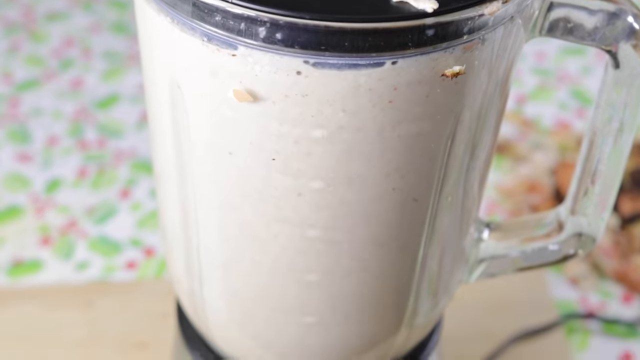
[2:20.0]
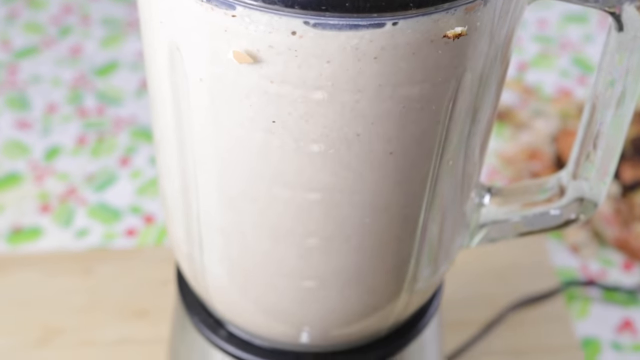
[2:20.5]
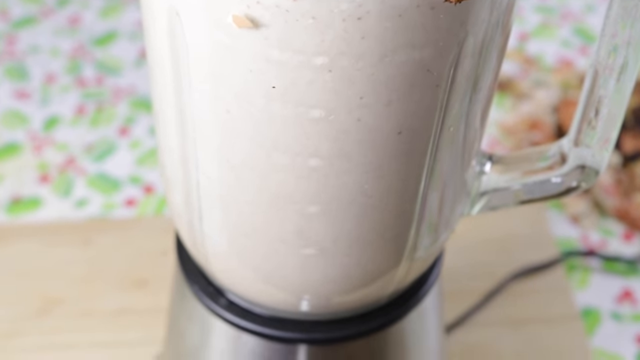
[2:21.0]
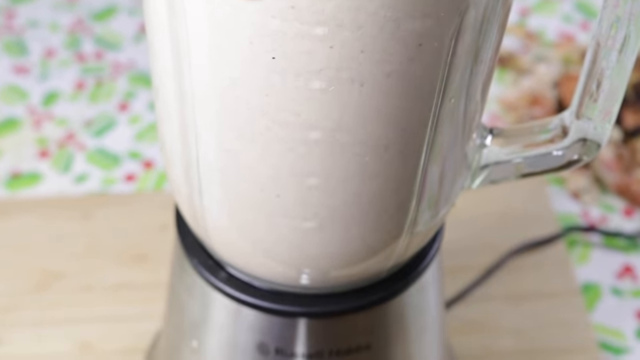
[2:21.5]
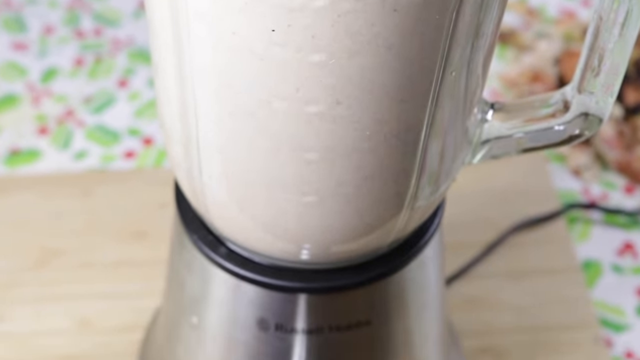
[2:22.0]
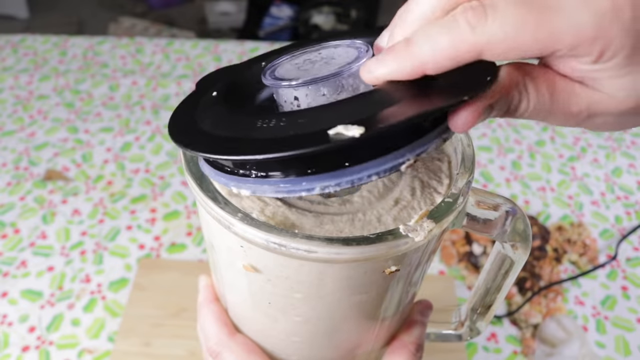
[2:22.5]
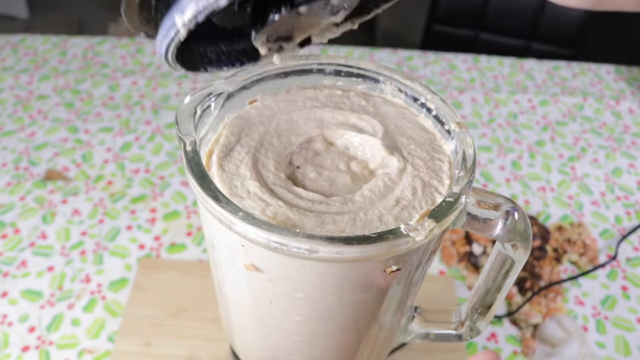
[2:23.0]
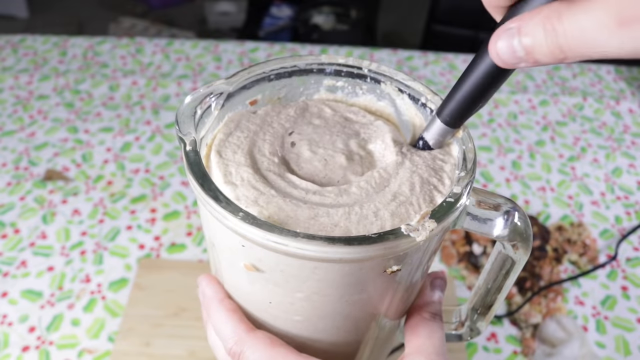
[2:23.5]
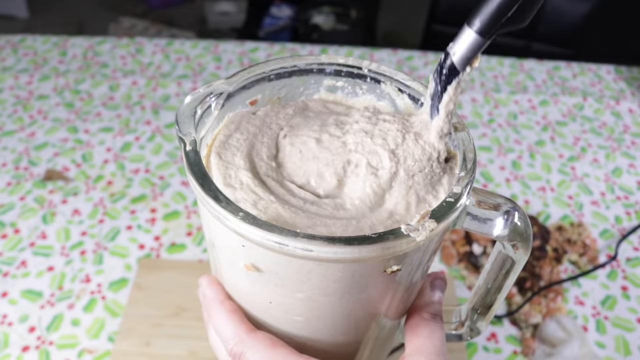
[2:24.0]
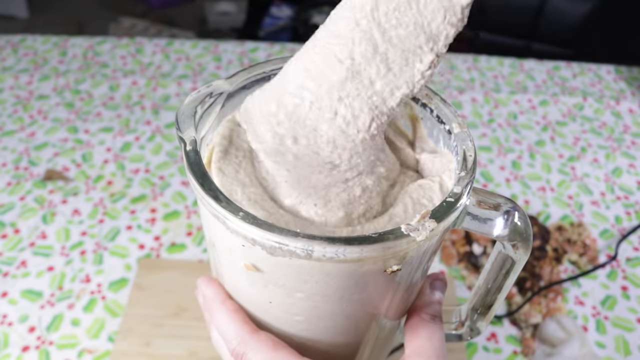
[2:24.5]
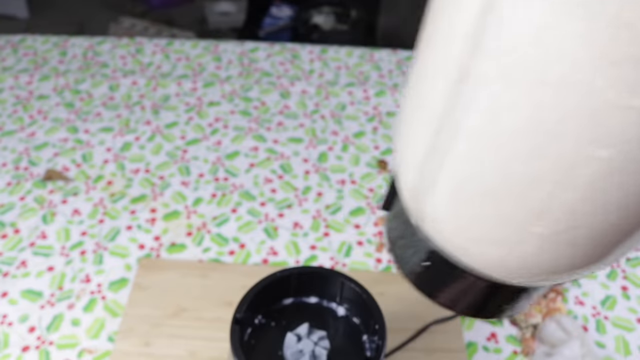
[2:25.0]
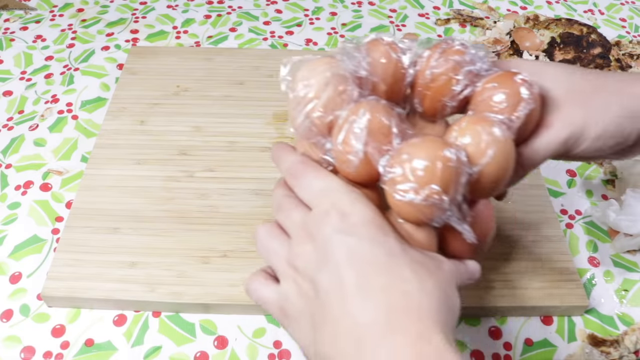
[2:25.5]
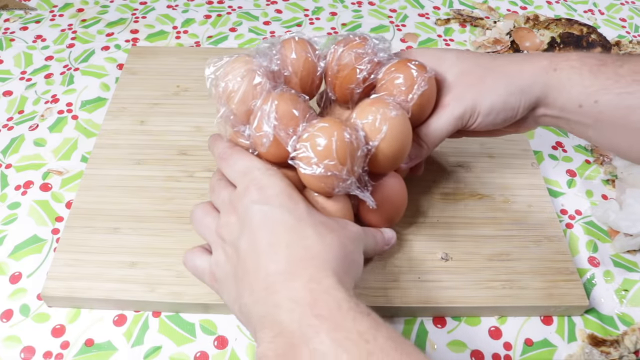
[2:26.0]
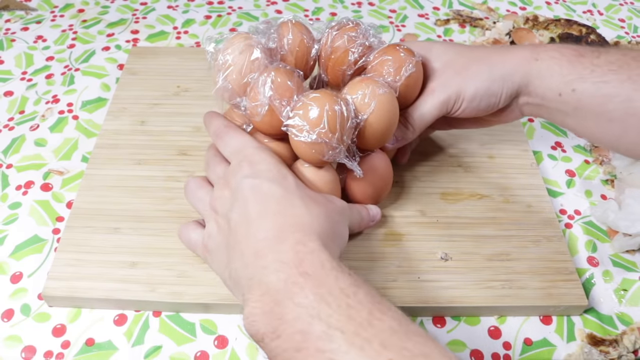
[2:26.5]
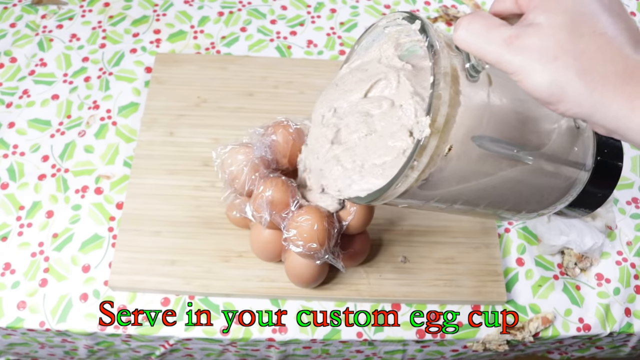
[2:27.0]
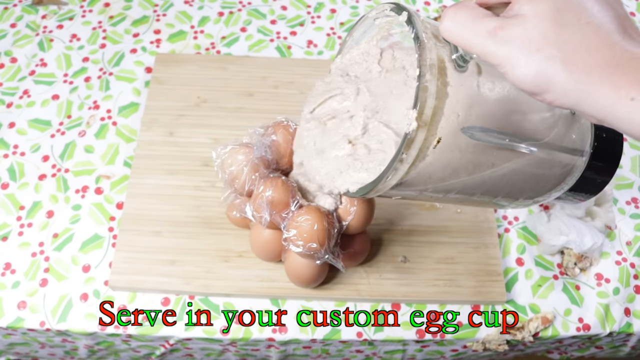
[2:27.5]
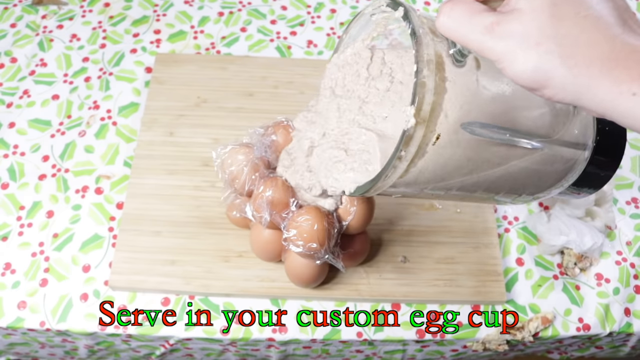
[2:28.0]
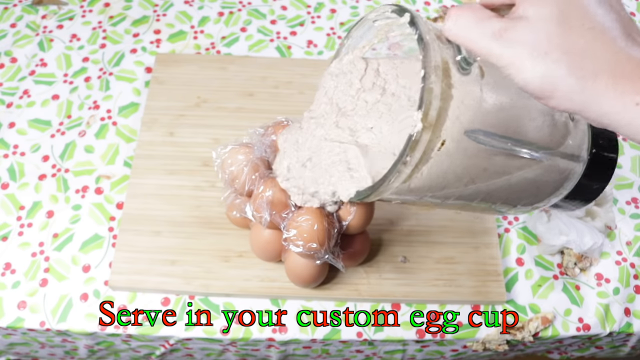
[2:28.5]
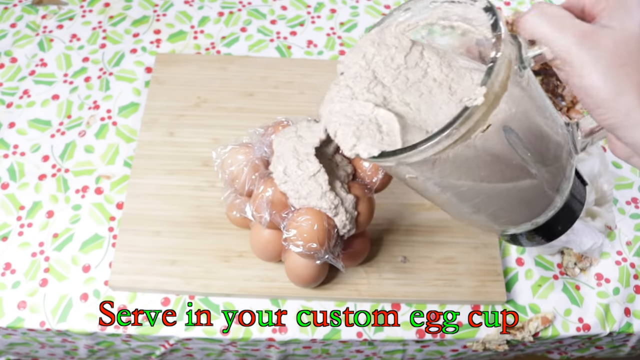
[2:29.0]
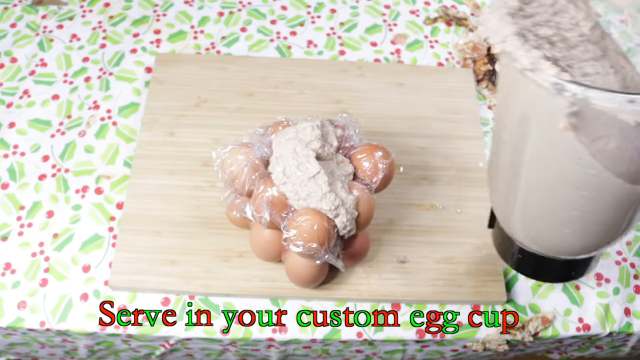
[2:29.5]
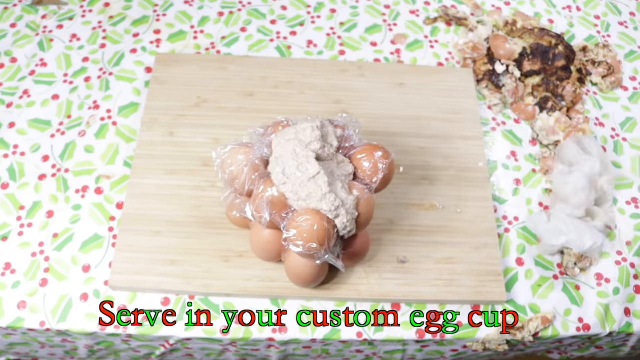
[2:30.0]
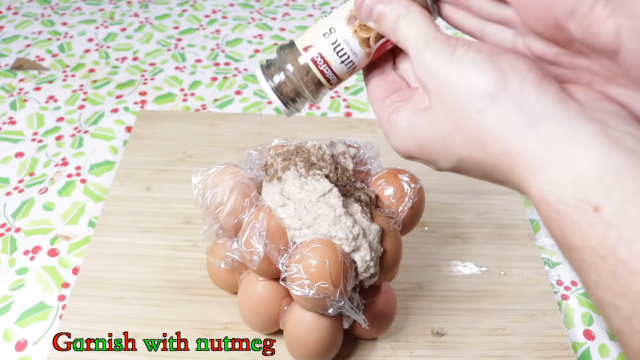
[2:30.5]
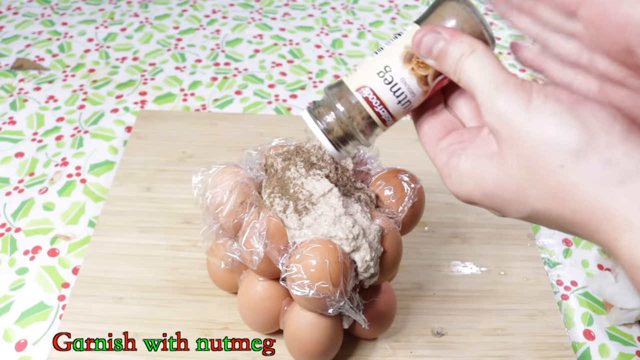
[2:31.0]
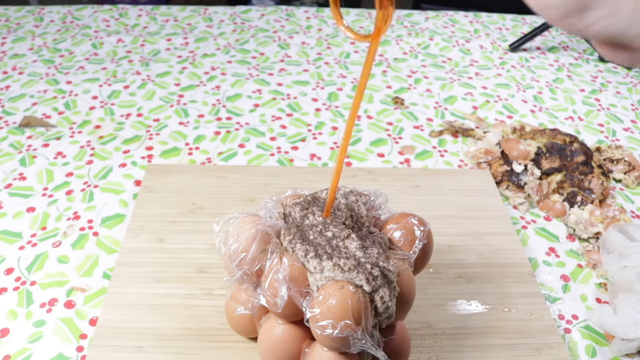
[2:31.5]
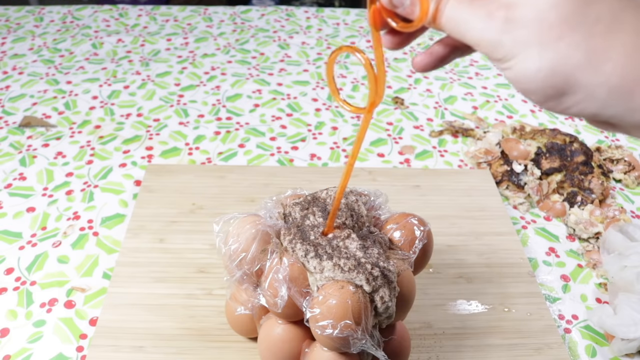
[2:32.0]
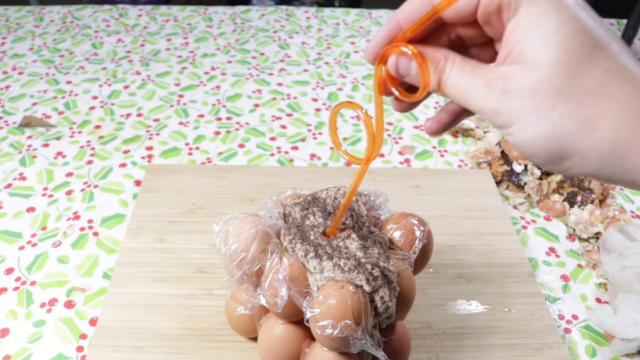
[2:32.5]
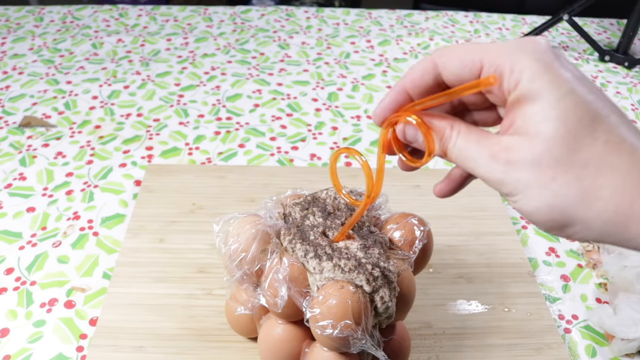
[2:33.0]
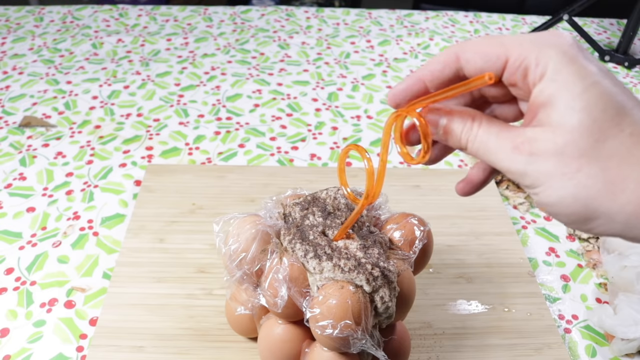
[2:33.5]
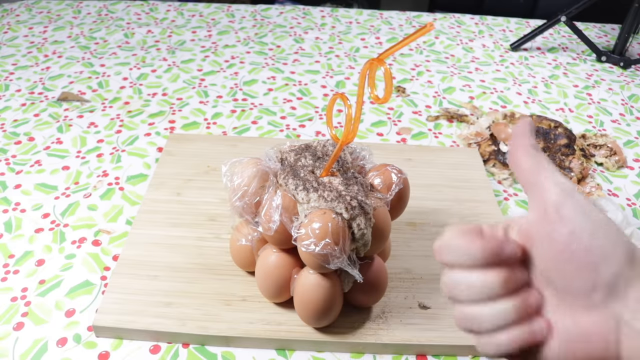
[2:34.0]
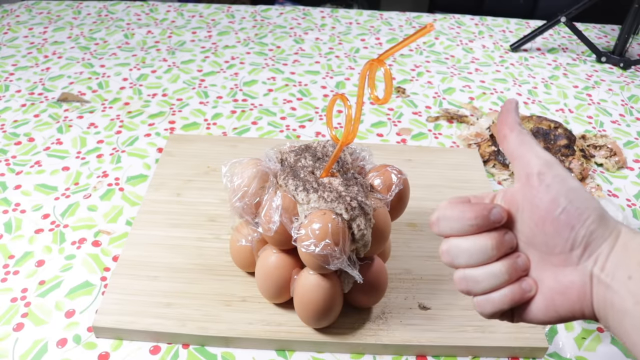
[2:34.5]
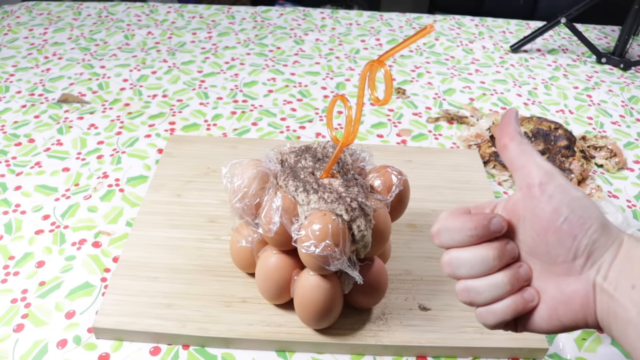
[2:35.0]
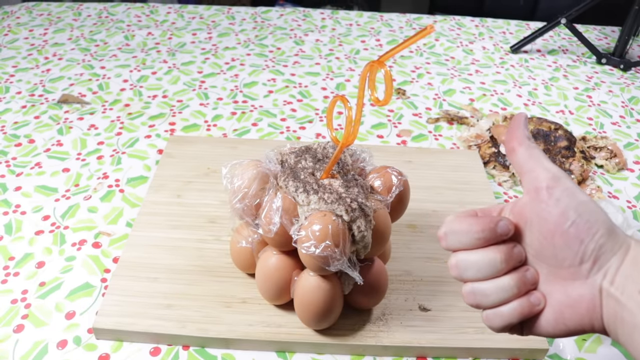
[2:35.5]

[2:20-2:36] The omelette continues to be blended into the paste in the food processor. The hand removes the cap again and stirs the liquid with the spatula. The blender cup is removed from the base off the right side of the screen. The hand places down what appears to be a bundle of eggs stuck together with plastic wrapping to form a cup, and the text "serve in your custom egg cup" is shown at the bottom of the screen in the same festive font. The eggs are placed onto a wooden cutting board, and the blender cup appears from the right and is poured into the egg cup; the liquid is very thick and chunky, and only a small part of it can be poured in. The blender cup is removed off the right side of the screen. Additional nutmeg is added on top of the liquid, and a decoration, perhaps a straw, looped twice in orange, is placed into the top of the liquid. The hand gives a thumbs up from the right side of the screen next to the egg cup, and the video fades to black.